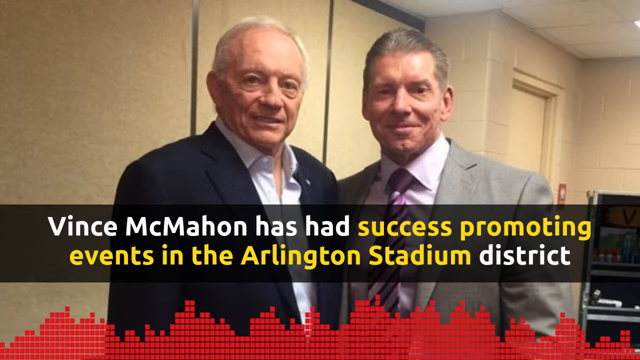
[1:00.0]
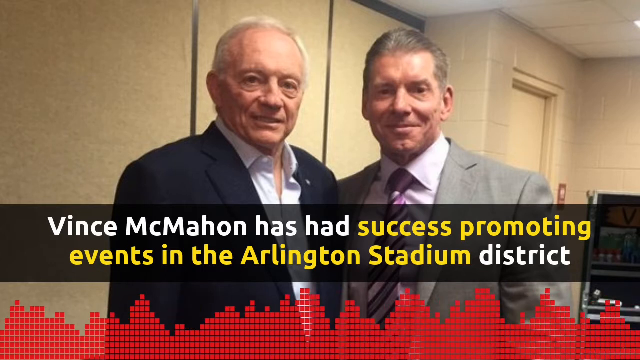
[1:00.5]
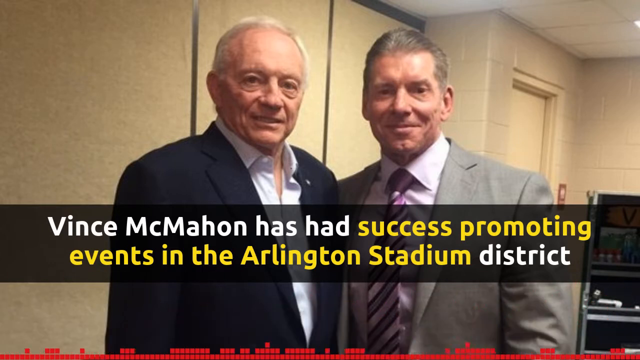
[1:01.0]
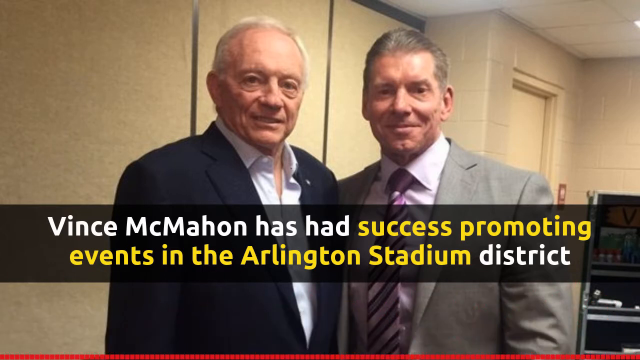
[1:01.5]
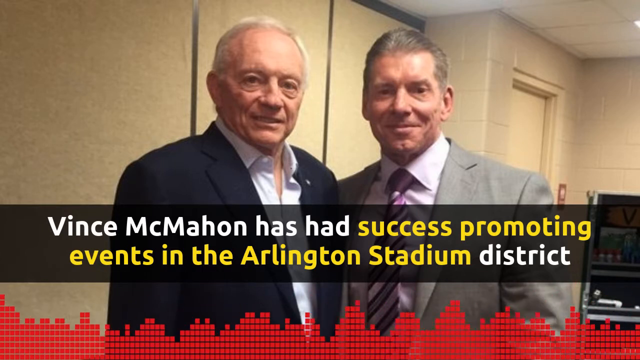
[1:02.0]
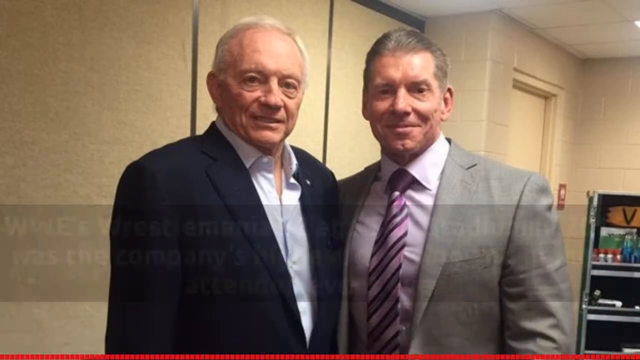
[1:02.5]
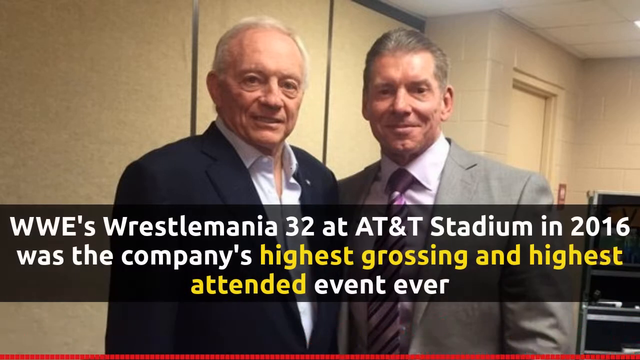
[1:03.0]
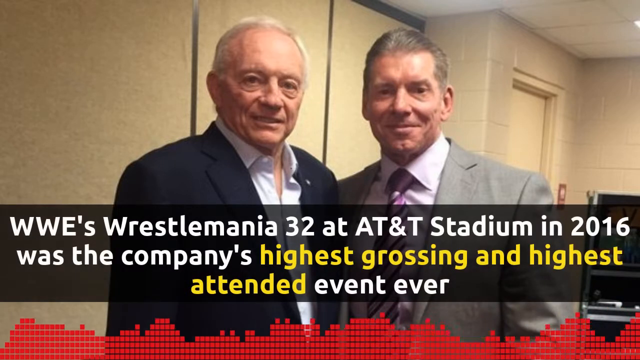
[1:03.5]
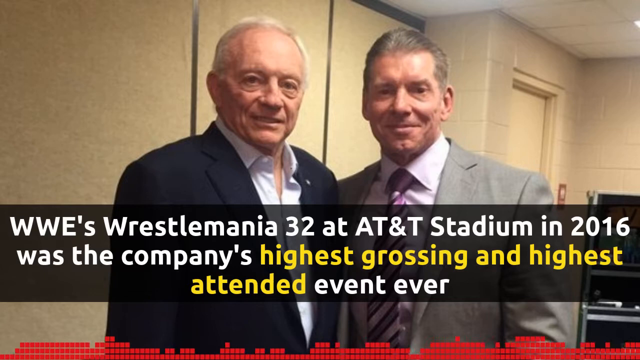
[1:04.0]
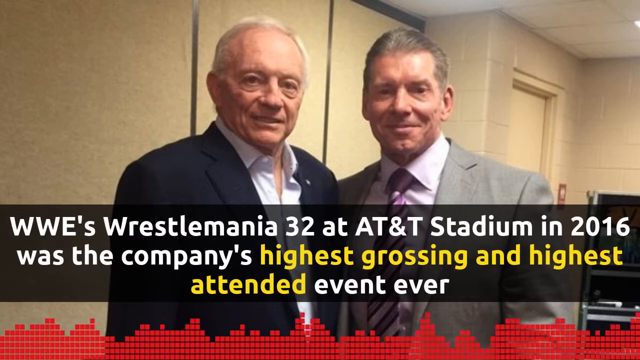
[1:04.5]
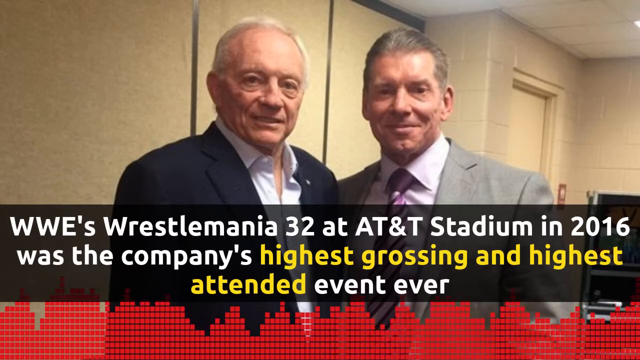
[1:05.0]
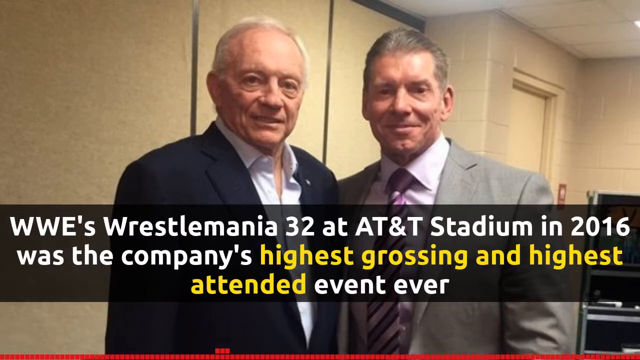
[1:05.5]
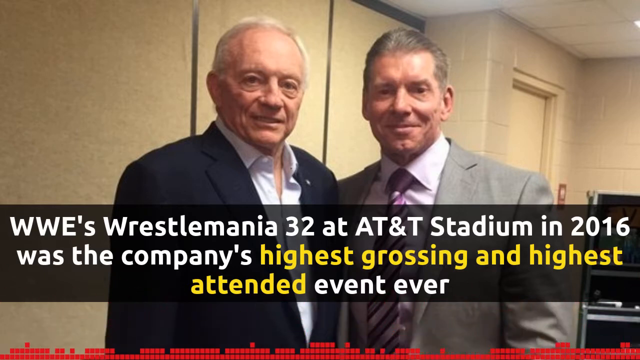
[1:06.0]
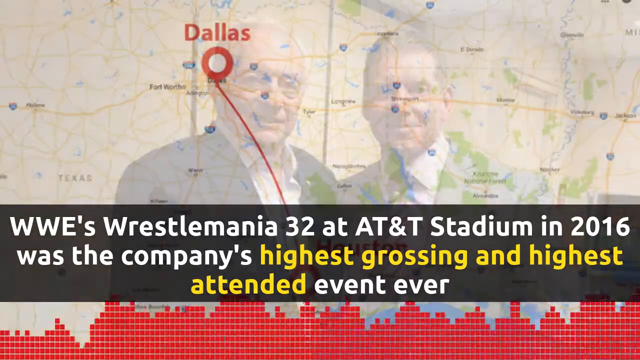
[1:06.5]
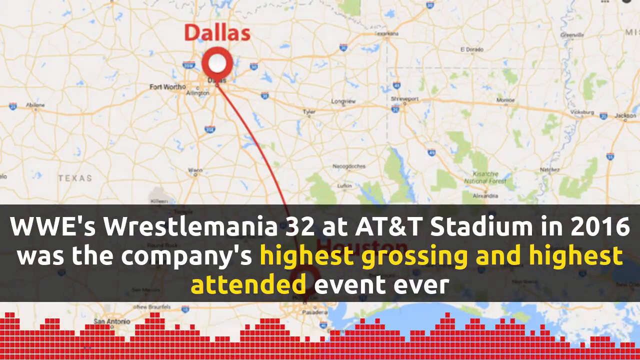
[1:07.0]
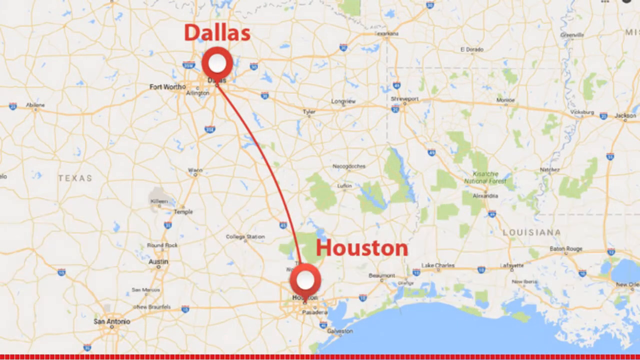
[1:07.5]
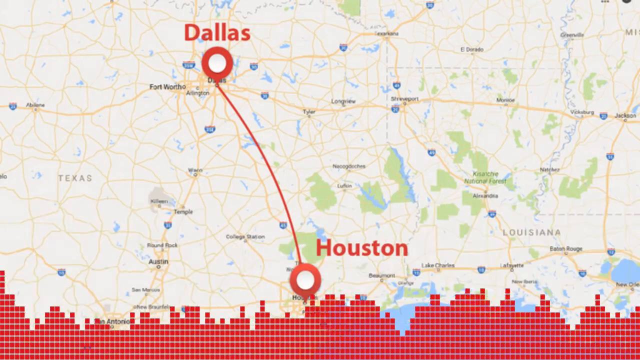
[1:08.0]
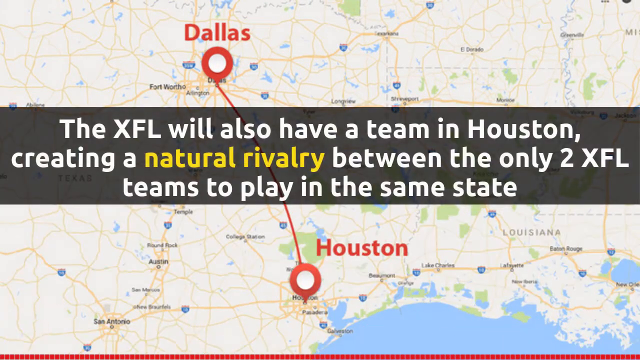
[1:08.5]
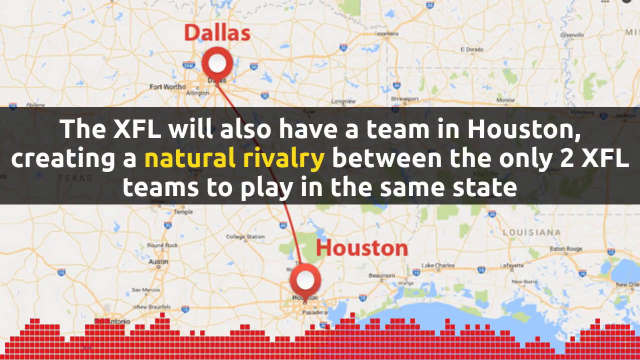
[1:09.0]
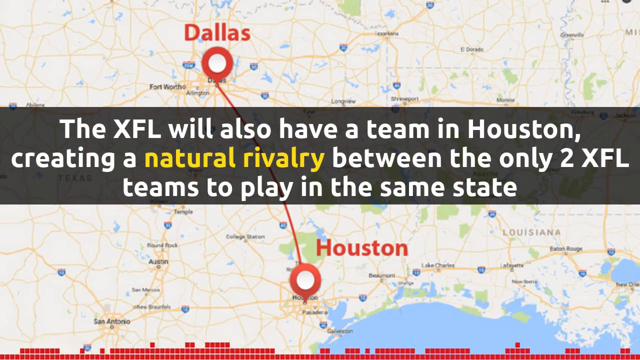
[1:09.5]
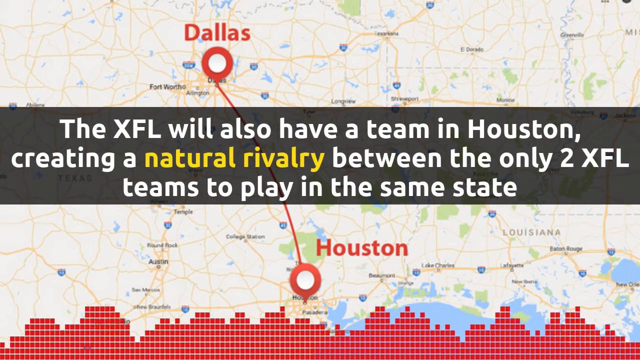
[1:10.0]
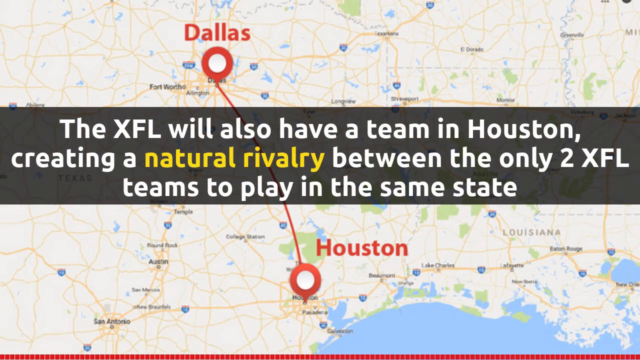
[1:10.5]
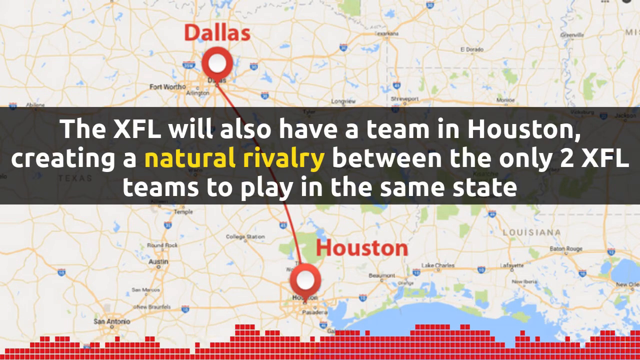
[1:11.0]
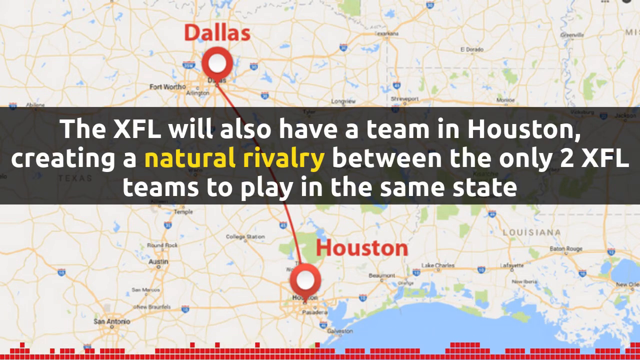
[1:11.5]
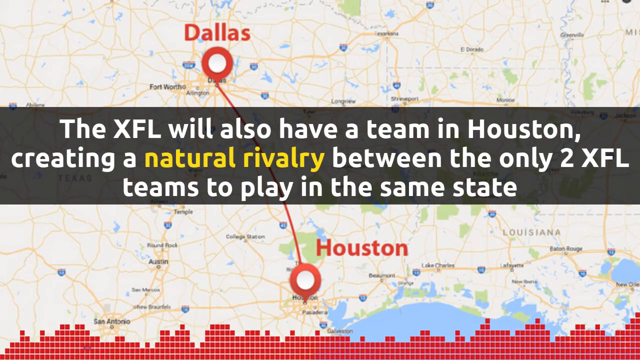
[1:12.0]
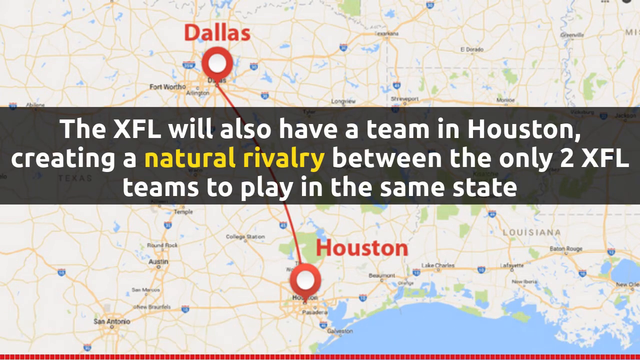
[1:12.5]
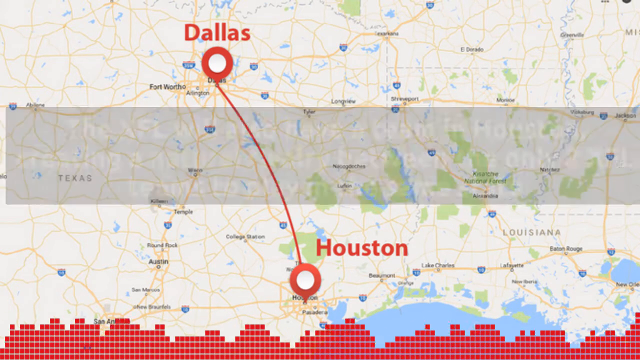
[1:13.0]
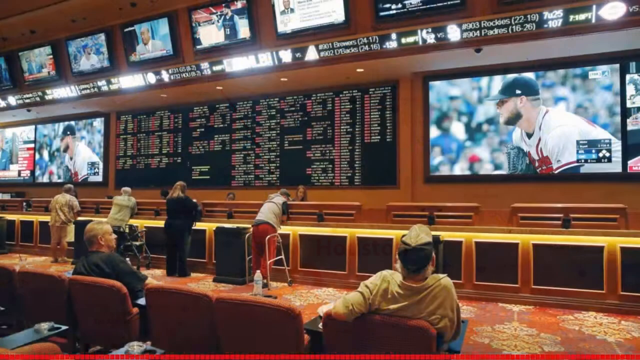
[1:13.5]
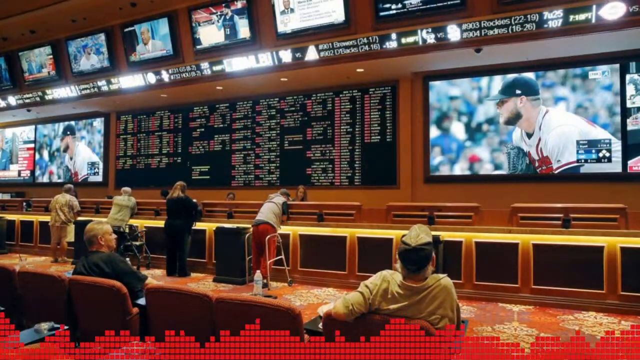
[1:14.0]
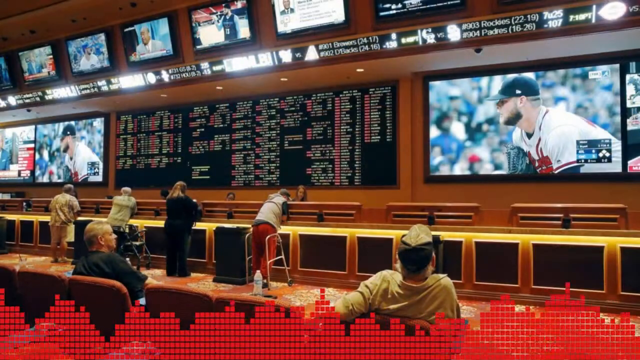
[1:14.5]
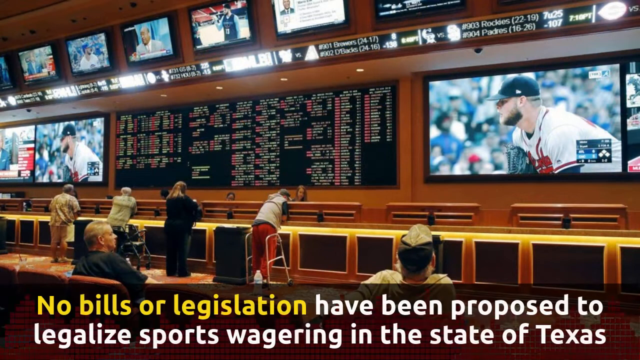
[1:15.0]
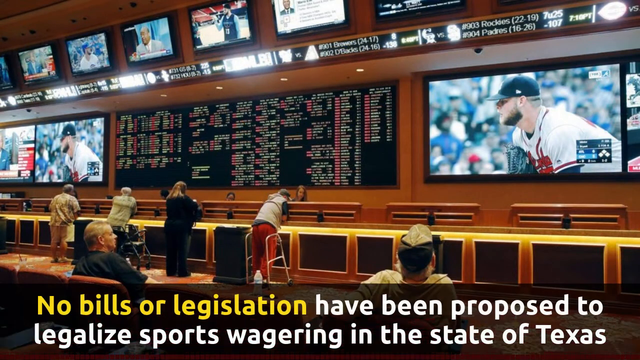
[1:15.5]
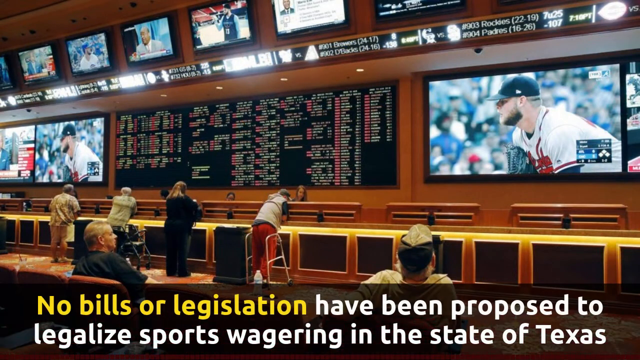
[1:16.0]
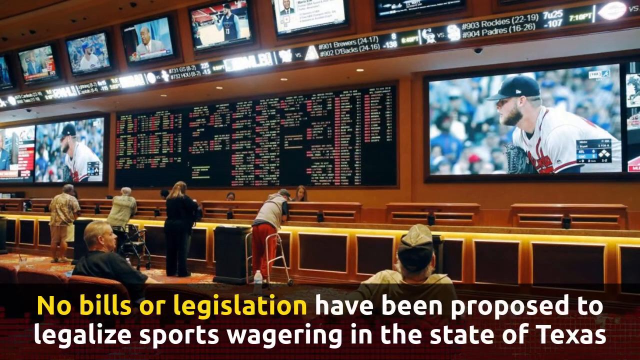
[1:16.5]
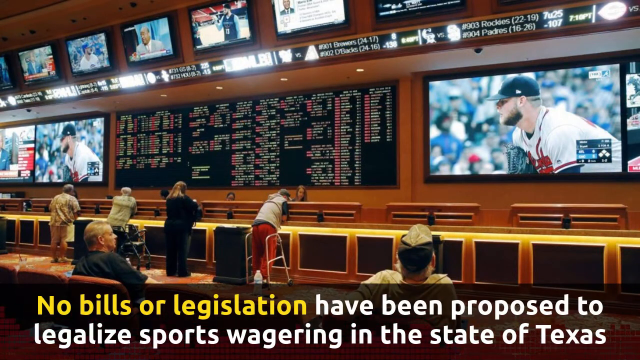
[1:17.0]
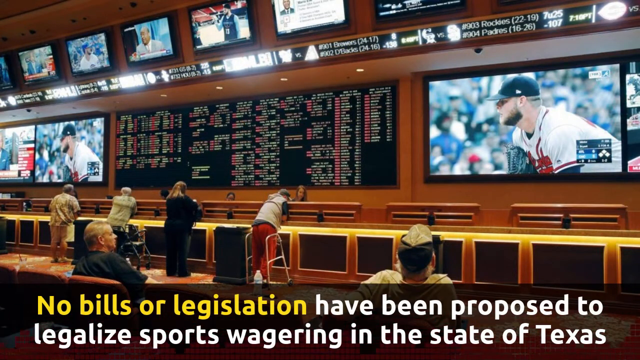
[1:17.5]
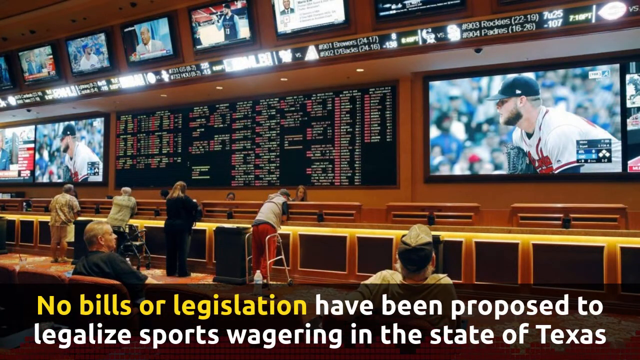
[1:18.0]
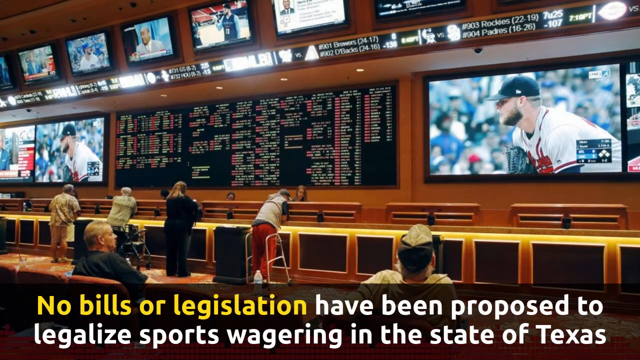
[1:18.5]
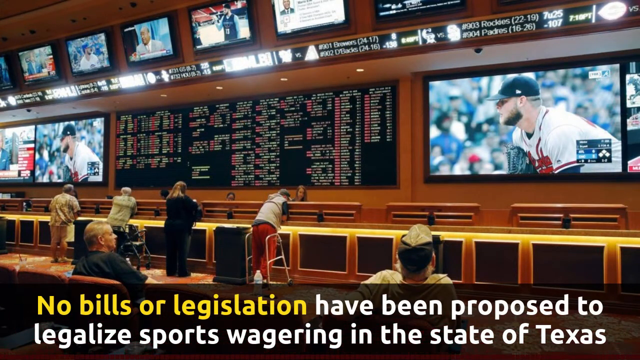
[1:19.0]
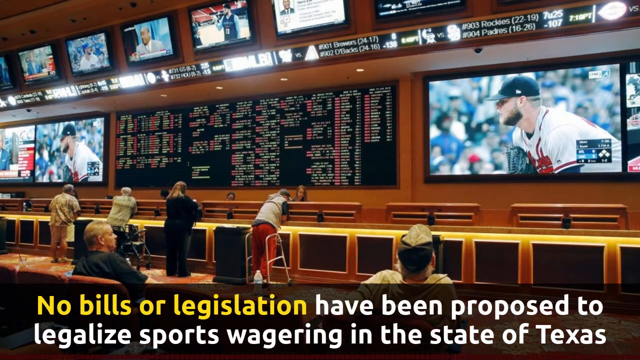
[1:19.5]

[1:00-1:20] McMahon and Jerry Jones remain on screen. A map then shows the distance between Dallas and Houston; the map appears to be taken from Google Maps. Finally, what appears to be a bookmakers is shown, with monitors showing baseball matches and people standing at counters. Another board appears to show betting odds. Four people are at the counters, two of them using Zimmer frames.